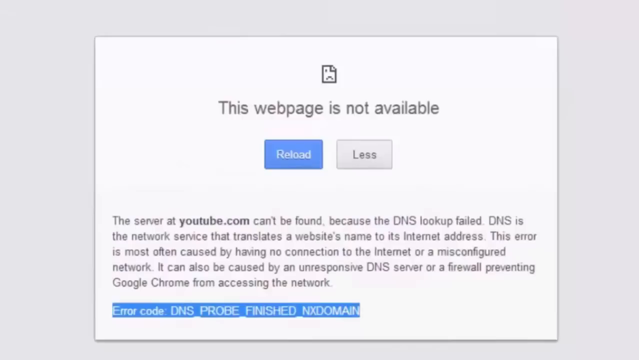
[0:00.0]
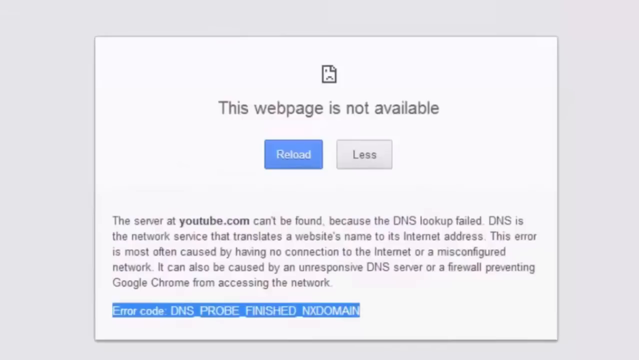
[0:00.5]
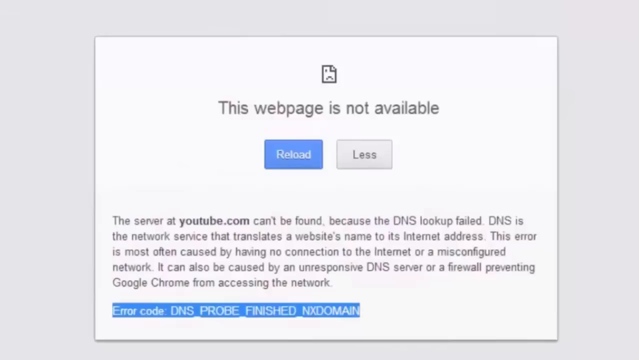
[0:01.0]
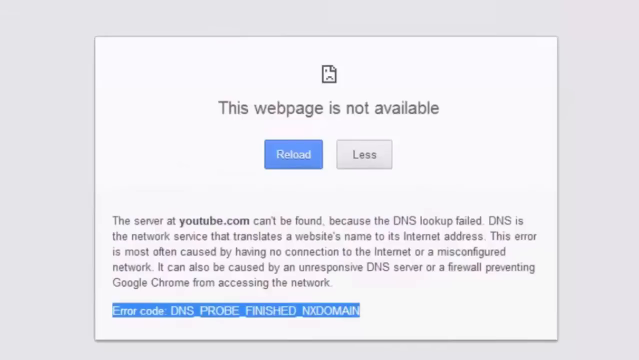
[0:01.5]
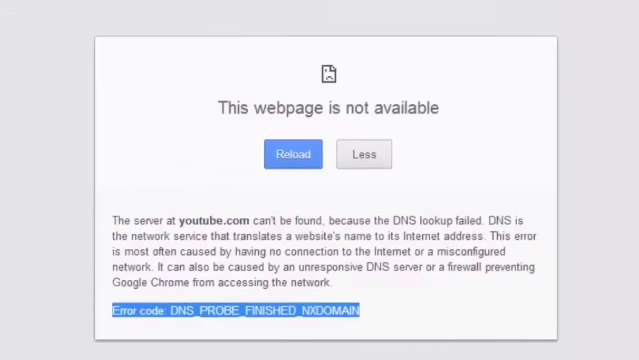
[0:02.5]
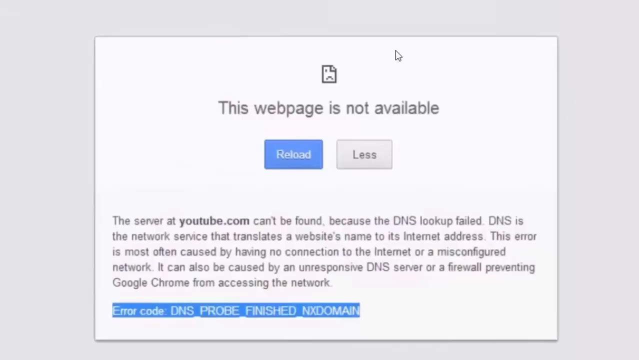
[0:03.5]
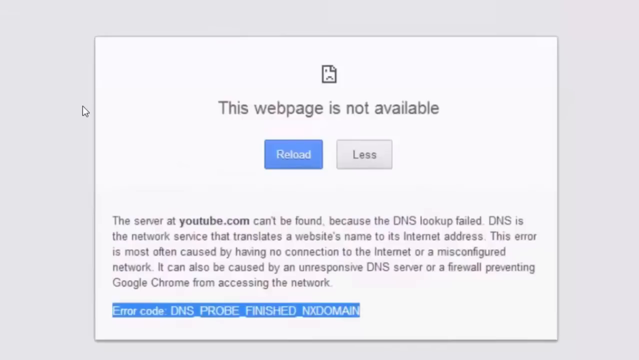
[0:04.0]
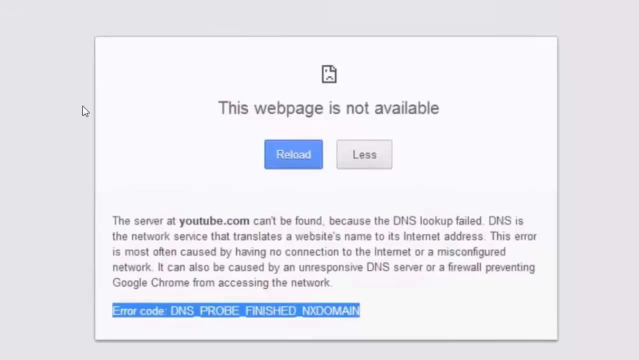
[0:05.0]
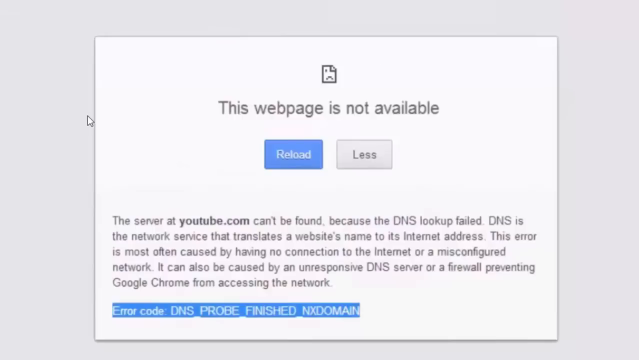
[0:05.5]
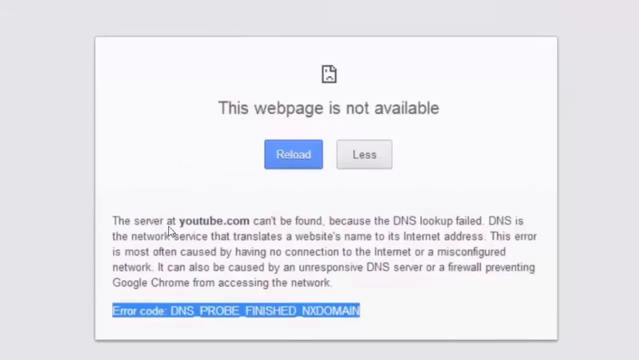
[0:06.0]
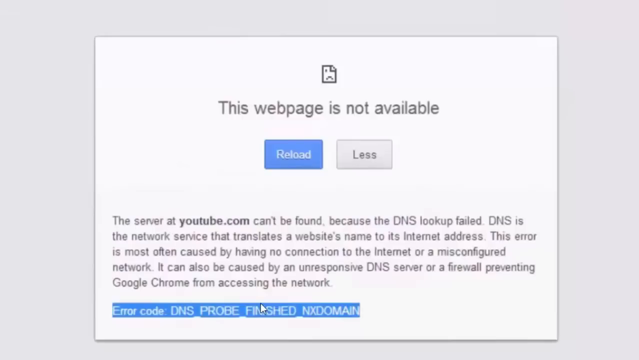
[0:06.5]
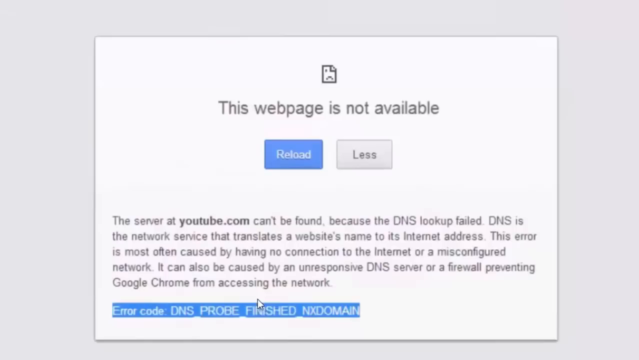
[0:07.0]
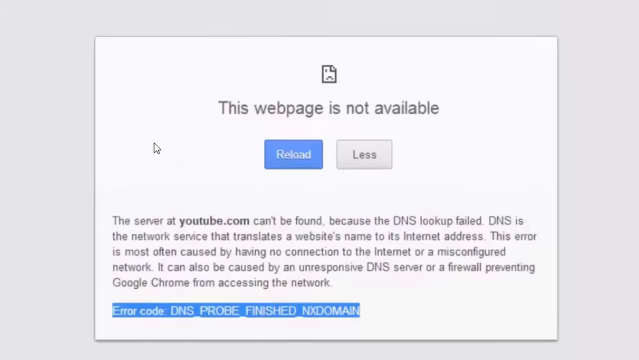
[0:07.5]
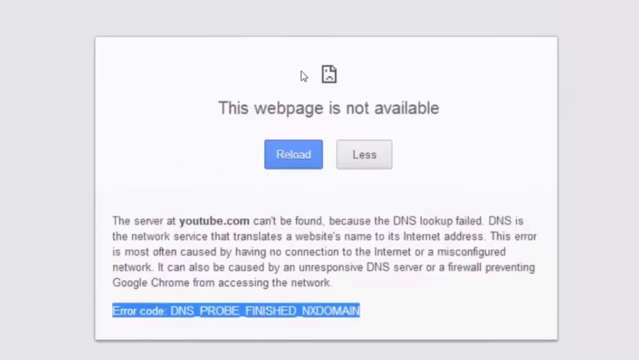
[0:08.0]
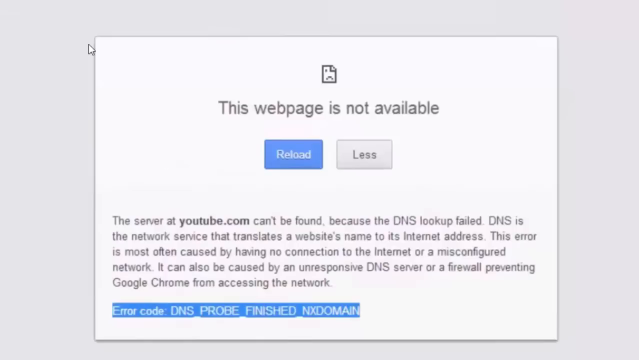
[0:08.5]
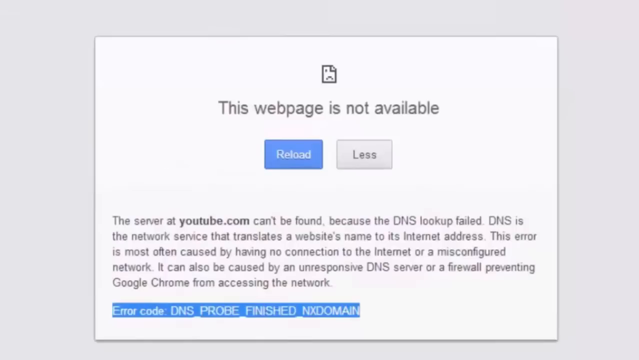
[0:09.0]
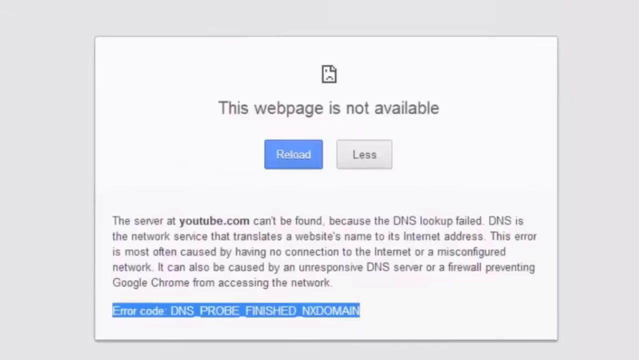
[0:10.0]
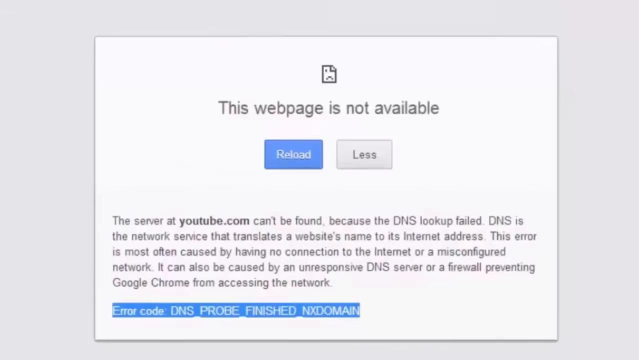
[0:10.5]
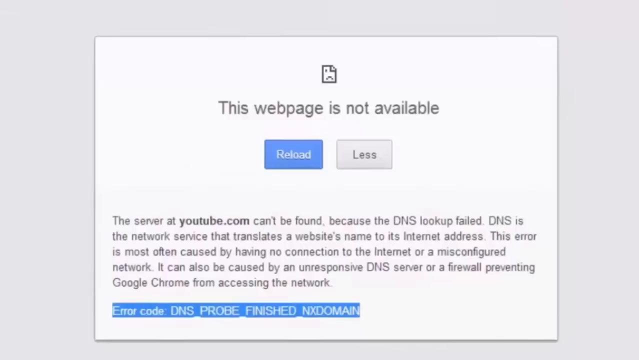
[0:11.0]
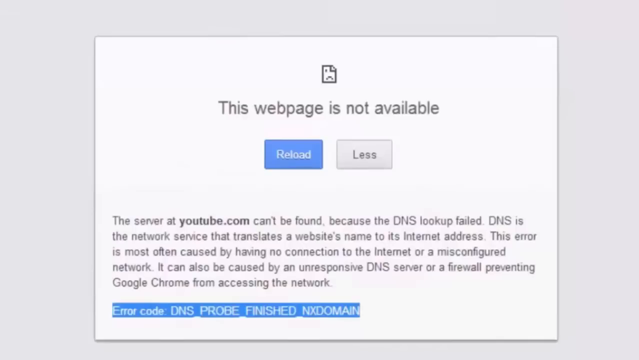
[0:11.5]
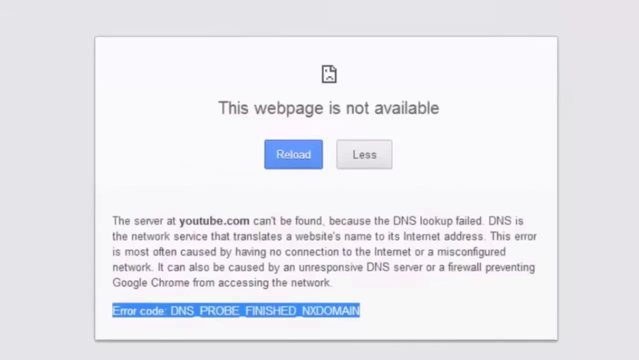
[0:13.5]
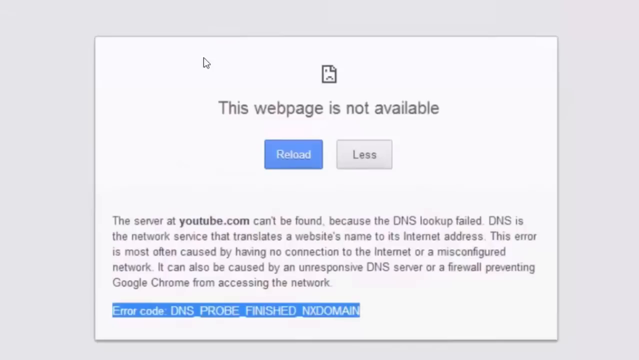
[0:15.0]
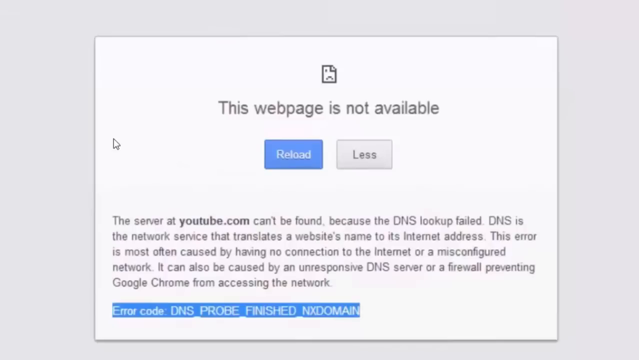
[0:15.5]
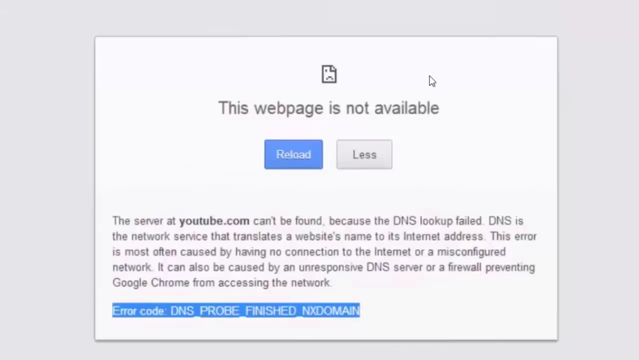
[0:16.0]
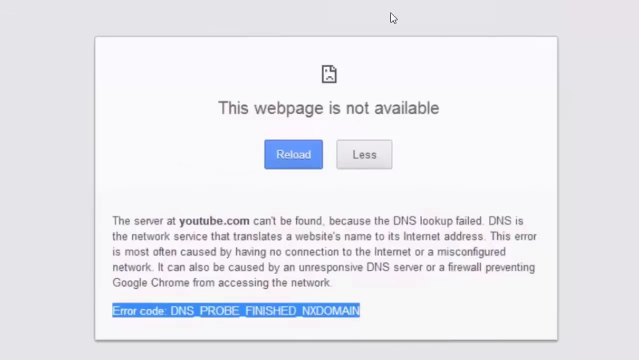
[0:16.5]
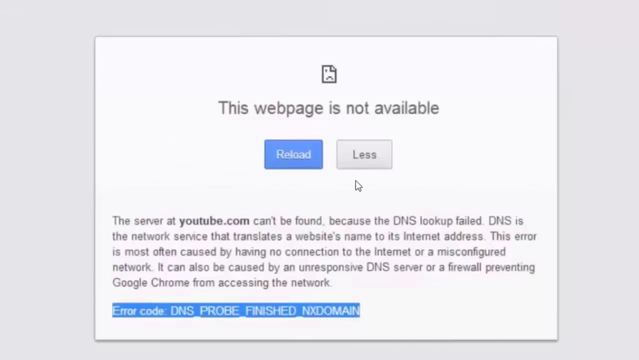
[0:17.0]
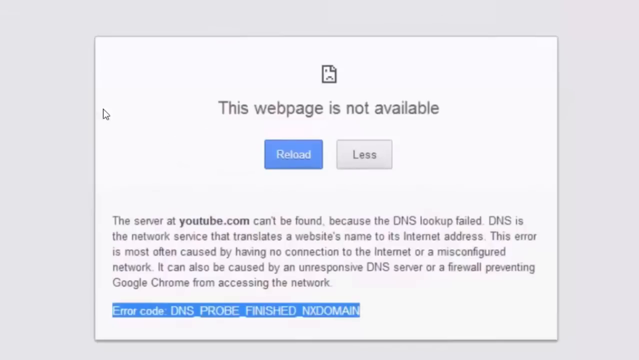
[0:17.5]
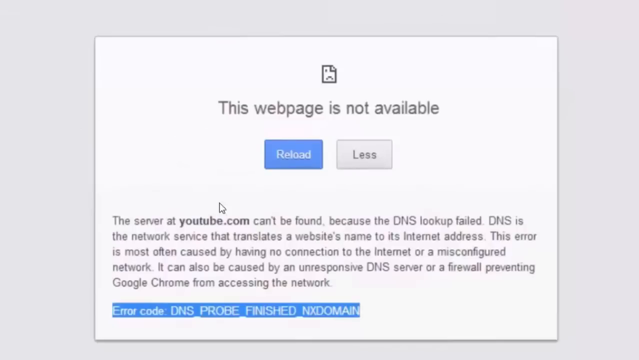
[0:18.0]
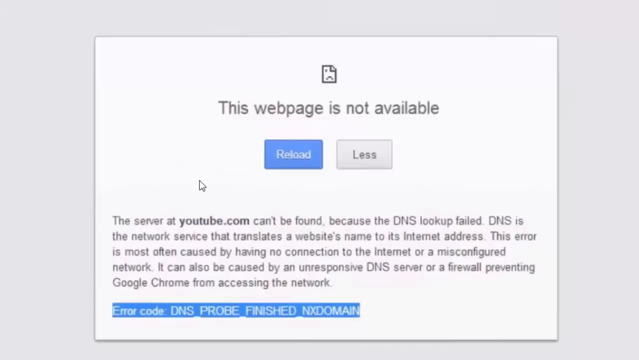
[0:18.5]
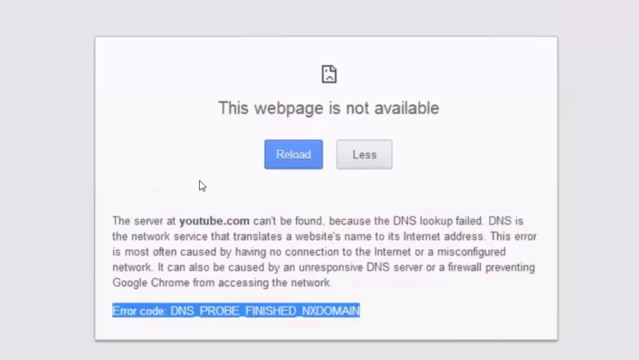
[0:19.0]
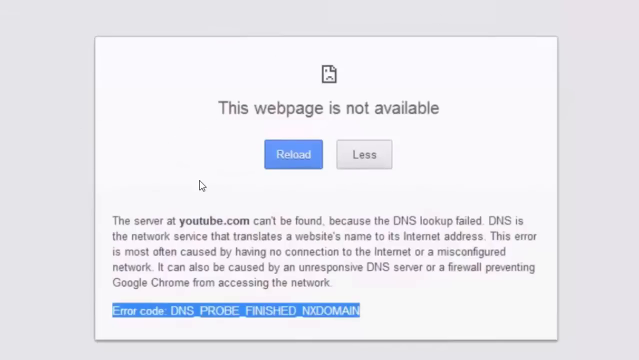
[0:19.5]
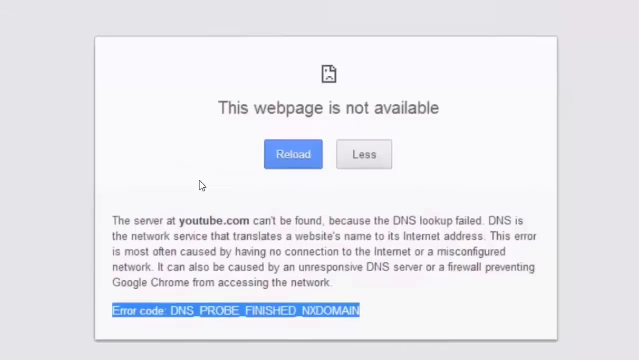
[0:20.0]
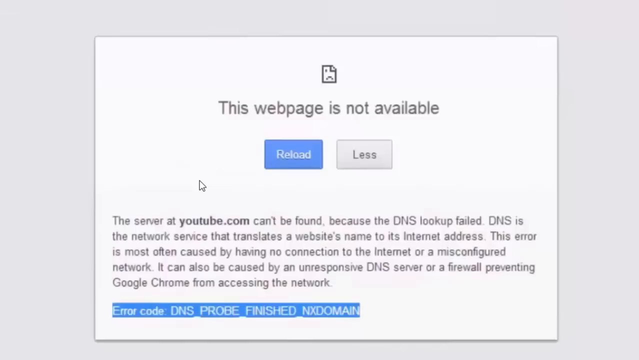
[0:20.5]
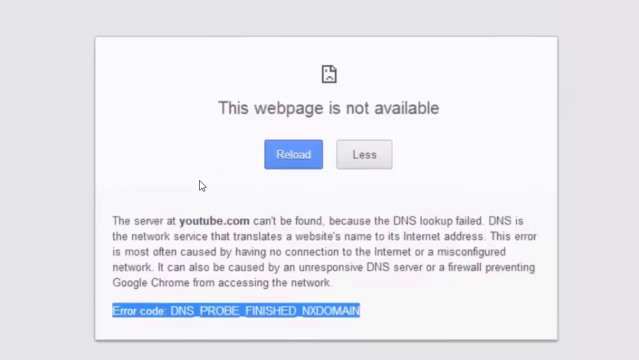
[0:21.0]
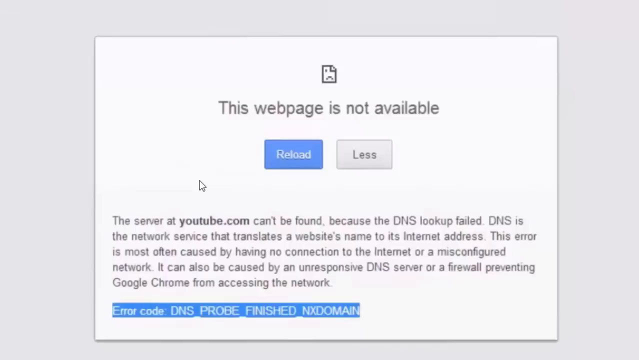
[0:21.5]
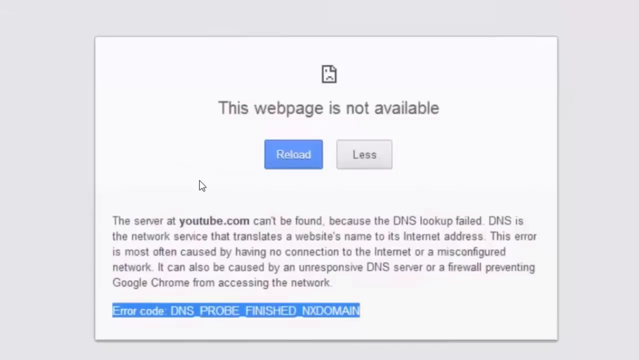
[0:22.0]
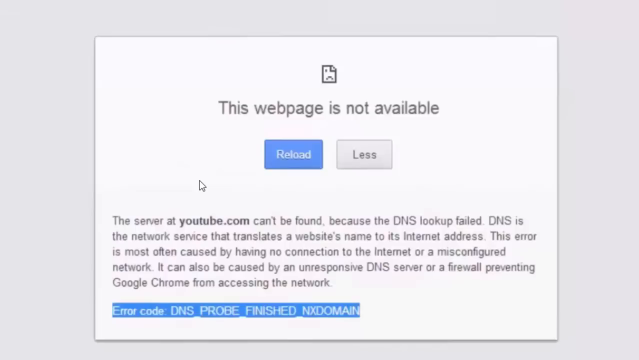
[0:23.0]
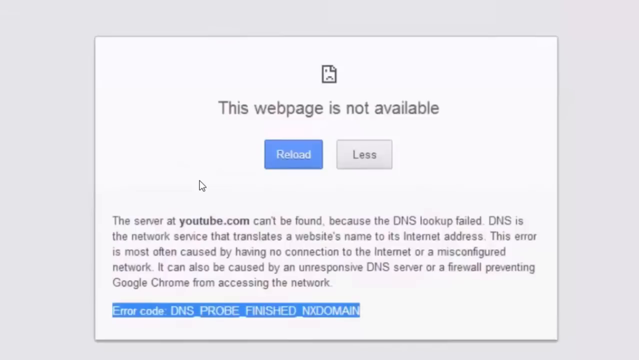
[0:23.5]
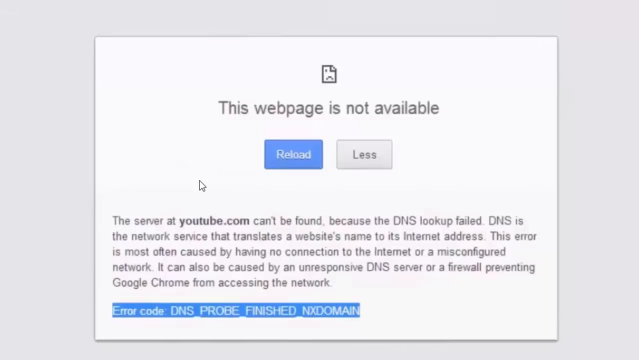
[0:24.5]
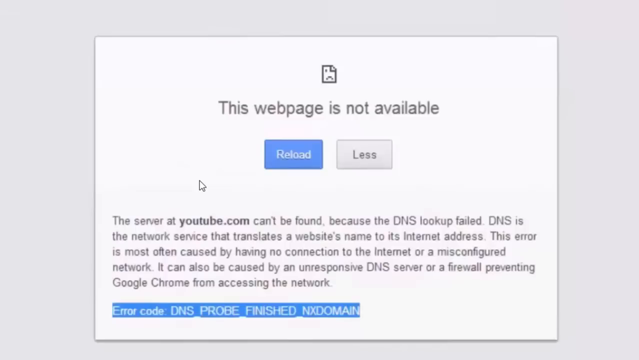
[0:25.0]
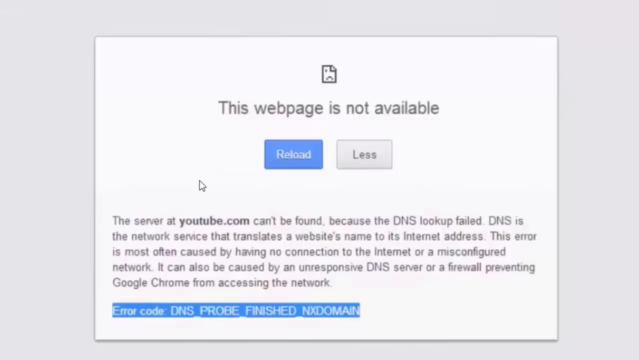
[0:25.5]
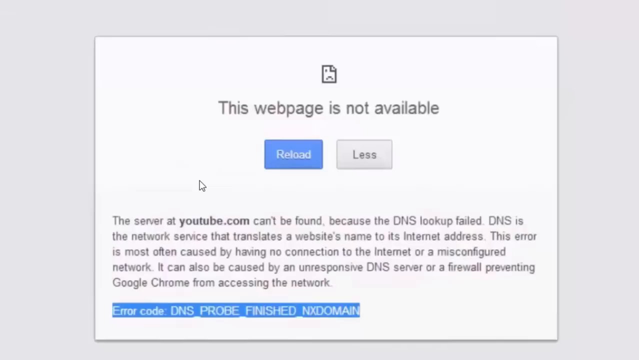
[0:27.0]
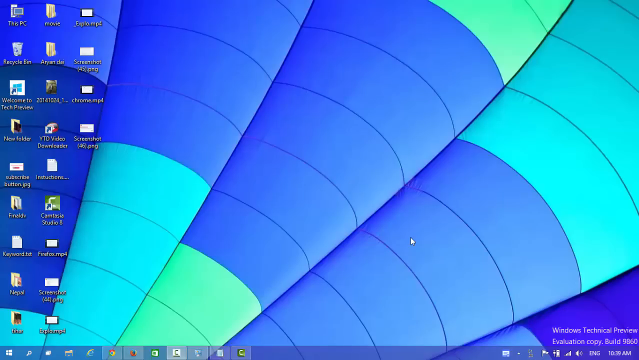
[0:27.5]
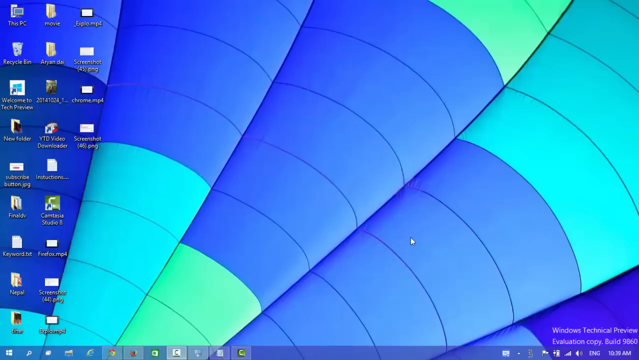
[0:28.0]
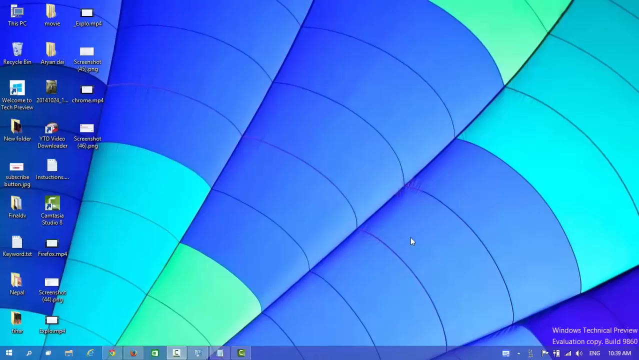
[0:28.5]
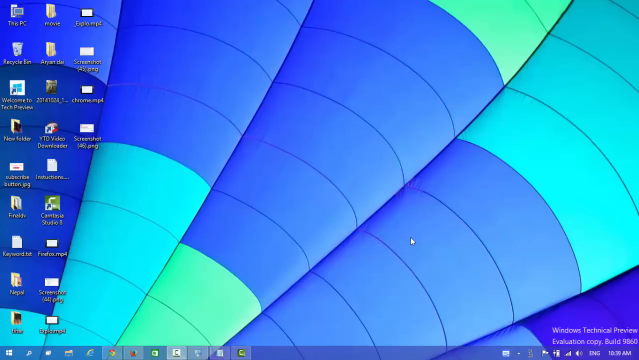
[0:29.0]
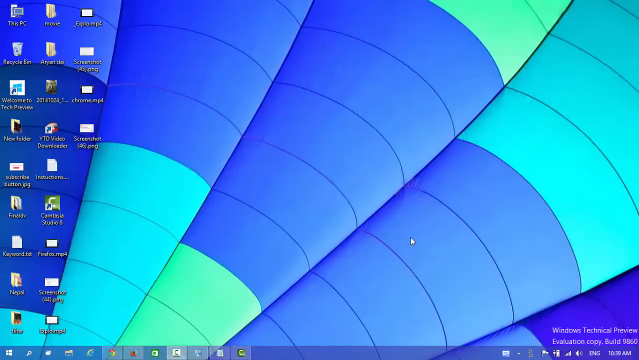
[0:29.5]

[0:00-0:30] The video begins with a screen that says "This web page is not available." Above that is an icon of a piece of paper with a frowning face on it. Below are two buttons: on the left a blue button labeled "reload," and on the right a gray button labeled "less." A message below says that the server at youtube.com can't be found because the DNS lookup failed, that DNS is the network service that translates a website's name to its internet address, that this error is most often caused by having no connection to the internet or a misconfigured network, and that it can also be caused by an unresponsive DNS server or a firewall preventing Google Chrome from accessing the network. Below that is an error code in all caps reading "DNS_PROBE_FINISHED_NX DOMAIN," which the person filming has highlighted with the mouse.